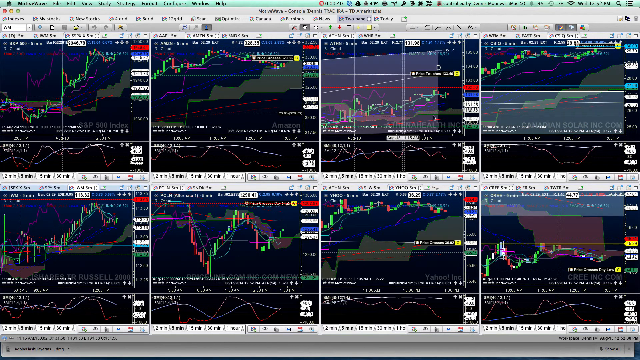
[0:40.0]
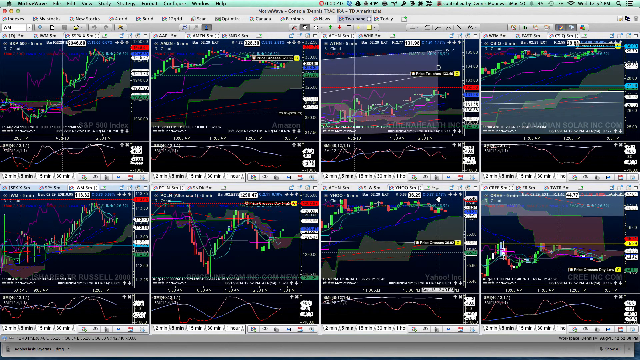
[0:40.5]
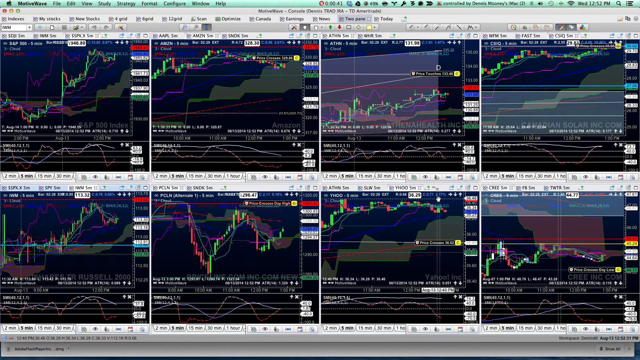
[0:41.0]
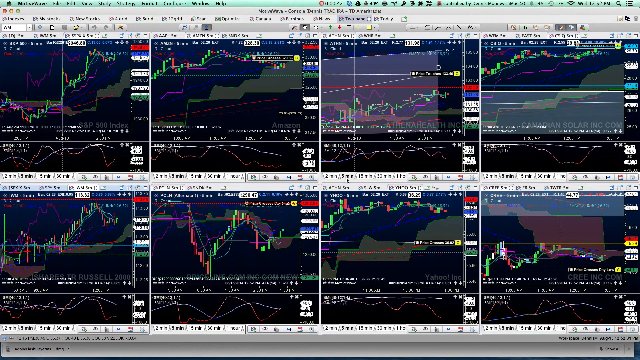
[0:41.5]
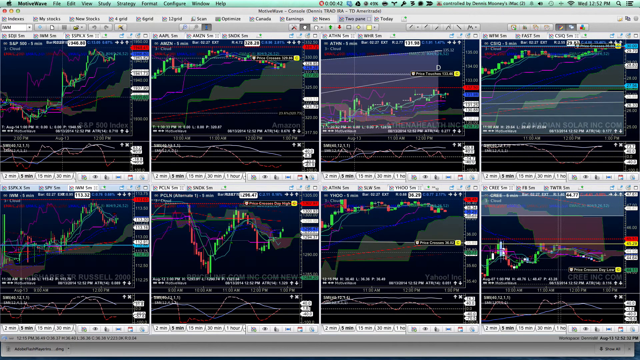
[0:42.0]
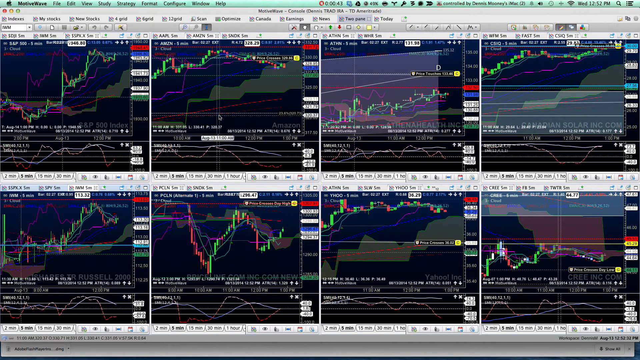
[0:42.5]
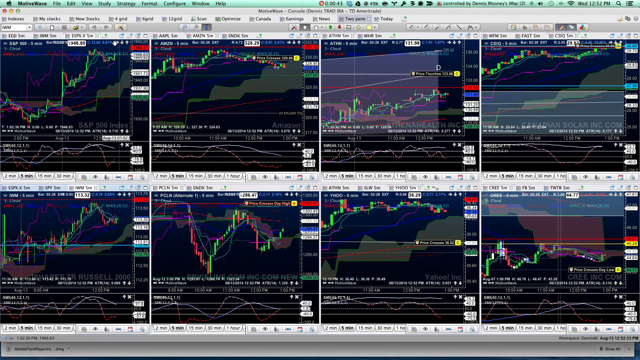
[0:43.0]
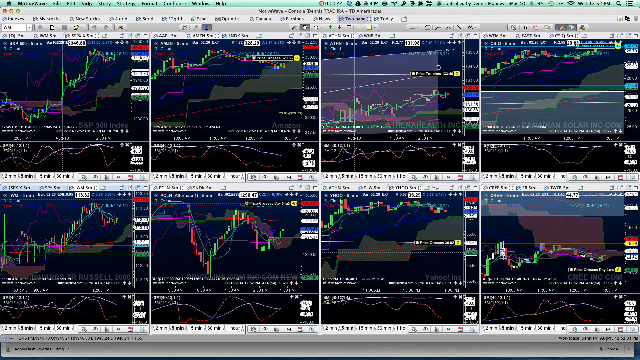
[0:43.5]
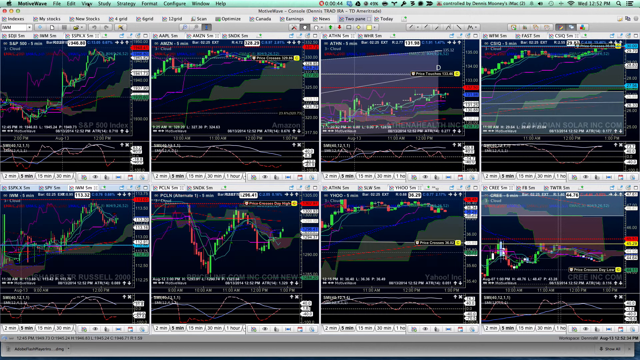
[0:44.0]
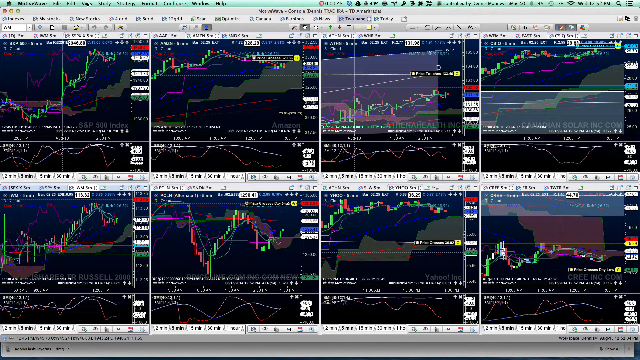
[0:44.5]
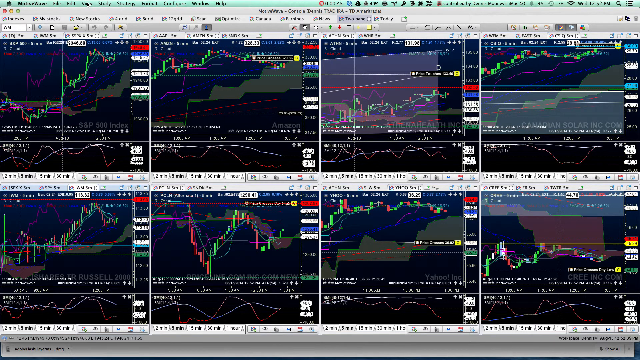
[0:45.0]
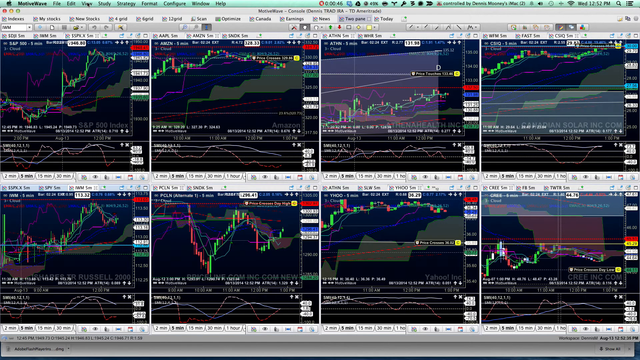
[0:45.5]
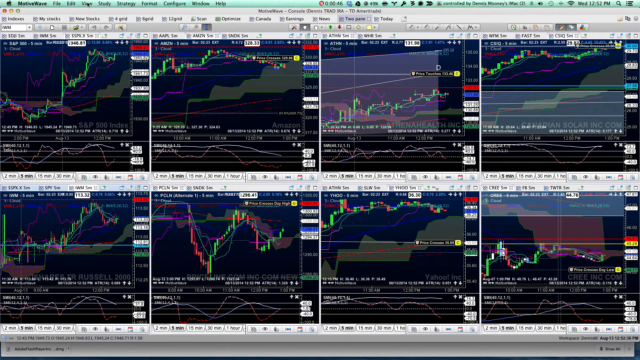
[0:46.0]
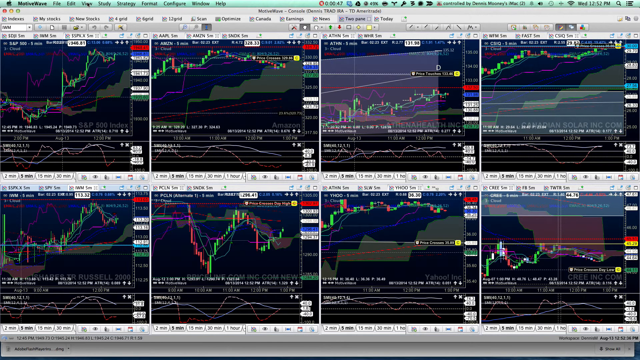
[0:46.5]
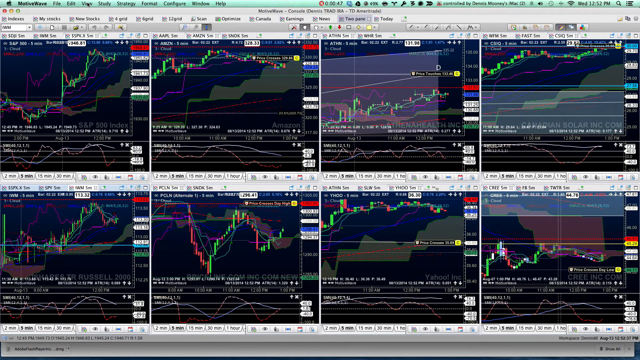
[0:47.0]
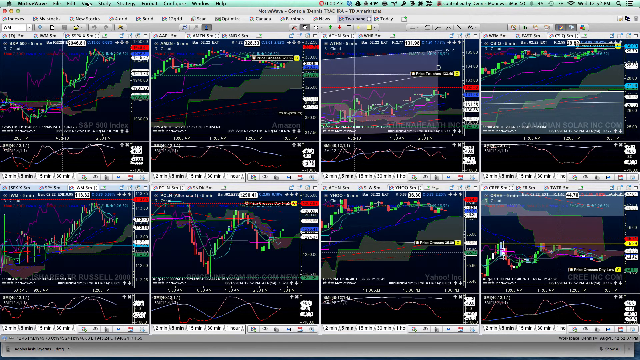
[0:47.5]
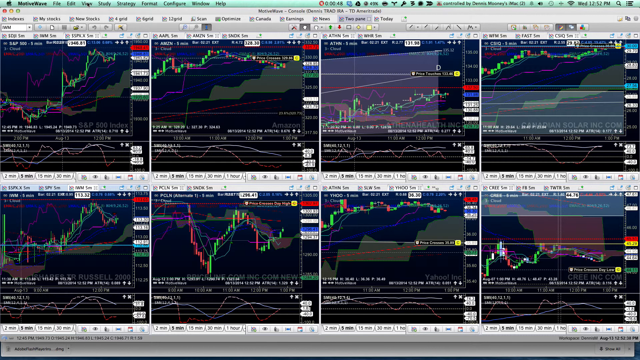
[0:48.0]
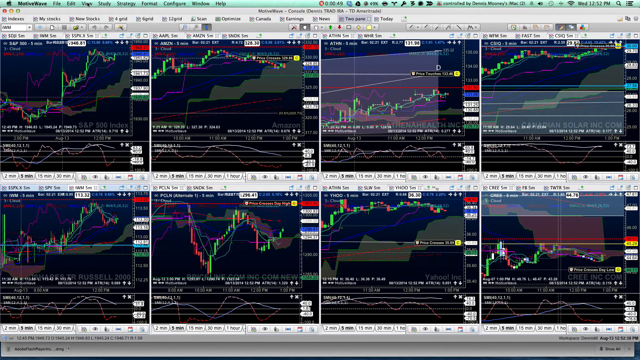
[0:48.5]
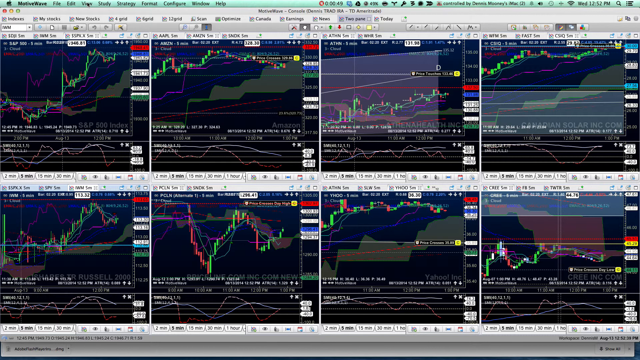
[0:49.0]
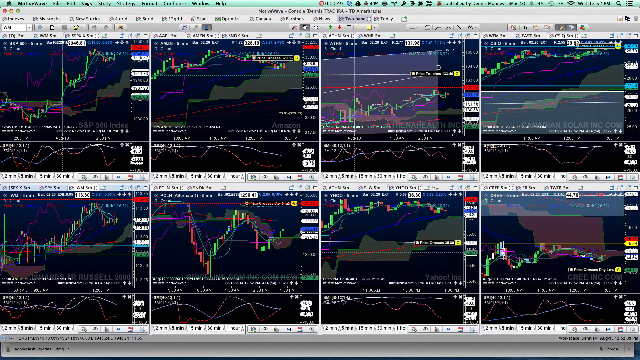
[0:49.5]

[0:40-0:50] In the new charts, background lines, possibly a more predictive form of the stock prices, are more prominent. Most of them are colored green and rise toward the top right, seemingly predicting an increase. Only the second and the fourth charts in the second row look to be decreasing; the second one might be increasing at the very end, but most of it follows a decreasing pattern. The third chart in the top row is slightly increasing but mostly looks stagnant. The user moves the mouse around, but nothing seems to change.